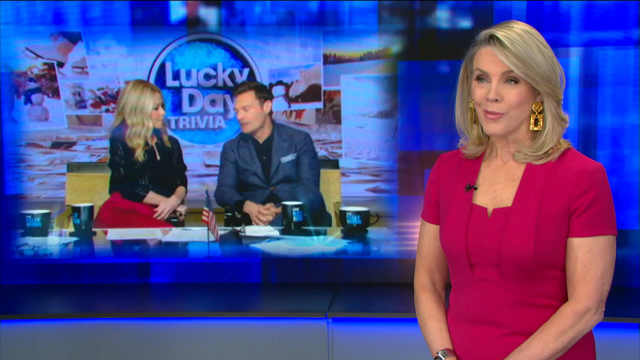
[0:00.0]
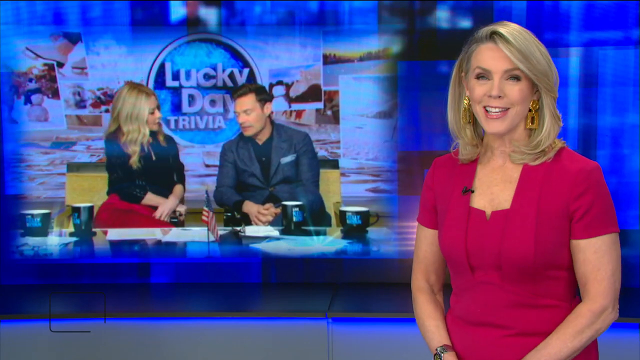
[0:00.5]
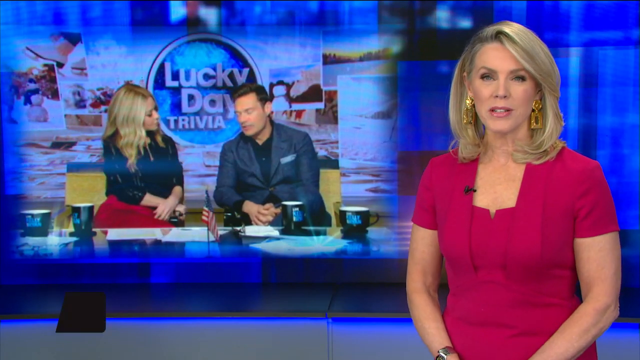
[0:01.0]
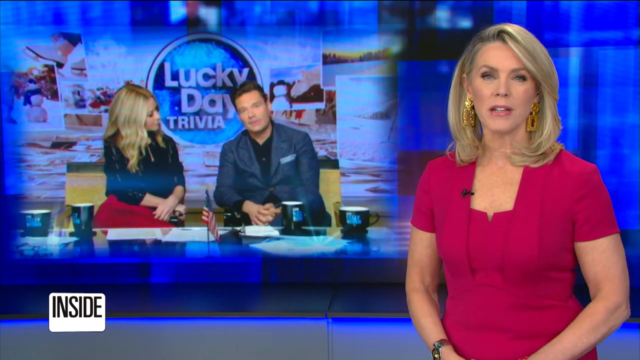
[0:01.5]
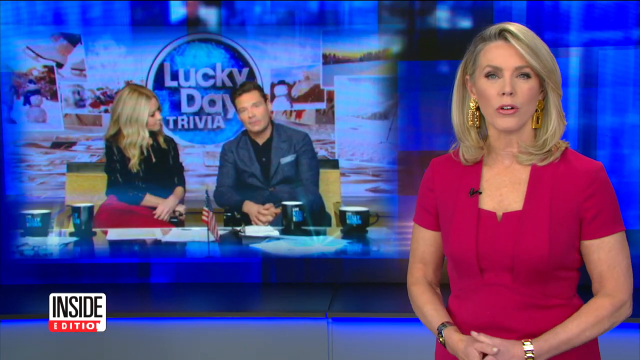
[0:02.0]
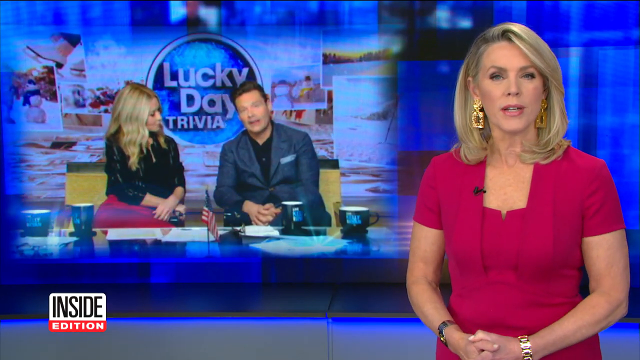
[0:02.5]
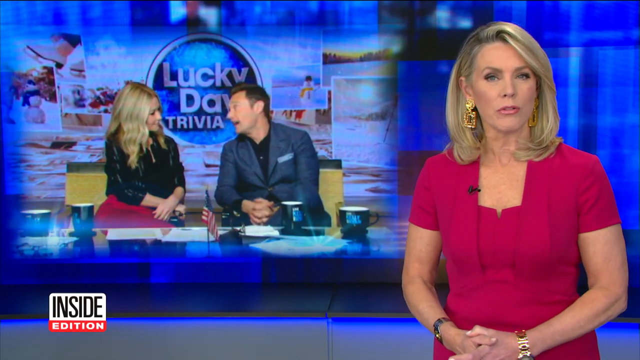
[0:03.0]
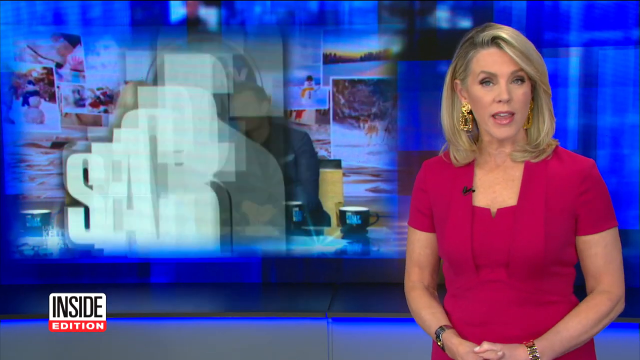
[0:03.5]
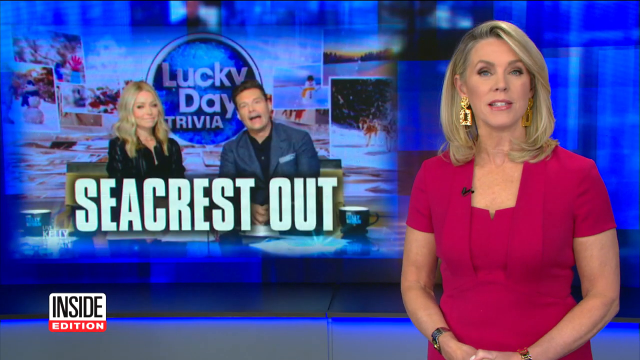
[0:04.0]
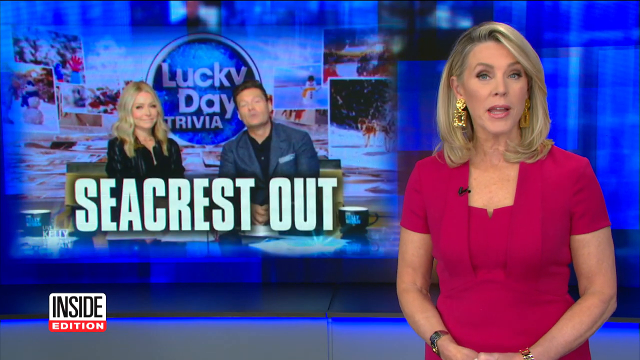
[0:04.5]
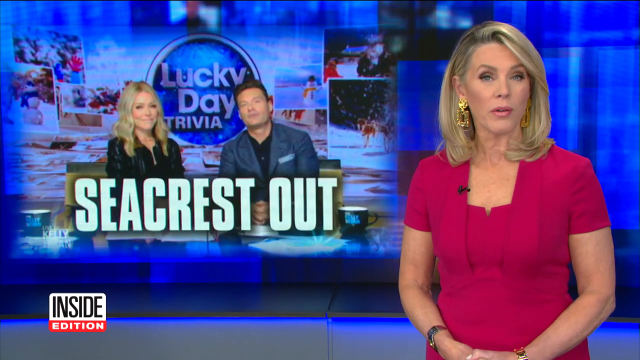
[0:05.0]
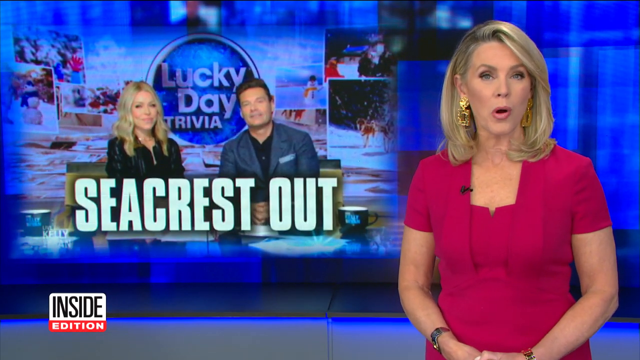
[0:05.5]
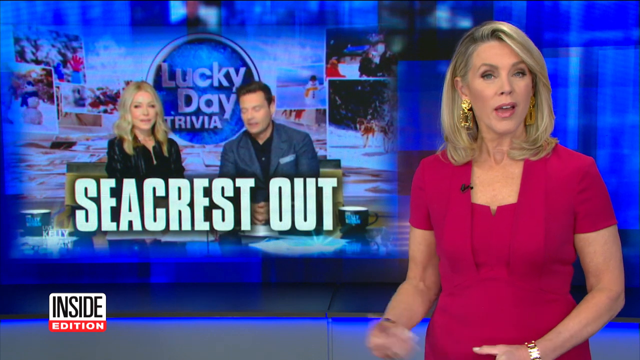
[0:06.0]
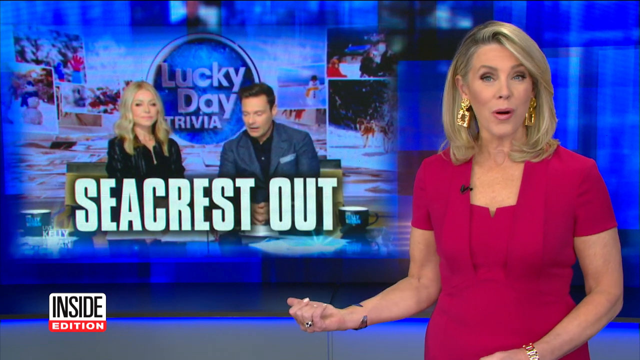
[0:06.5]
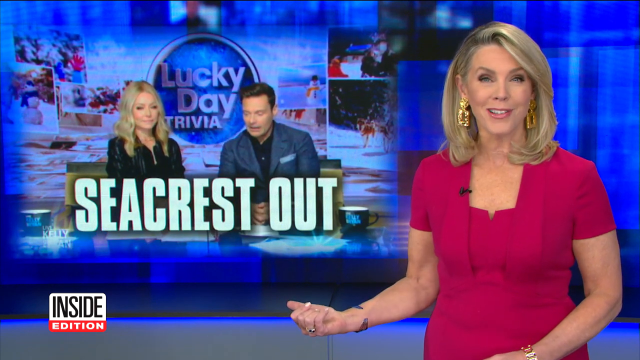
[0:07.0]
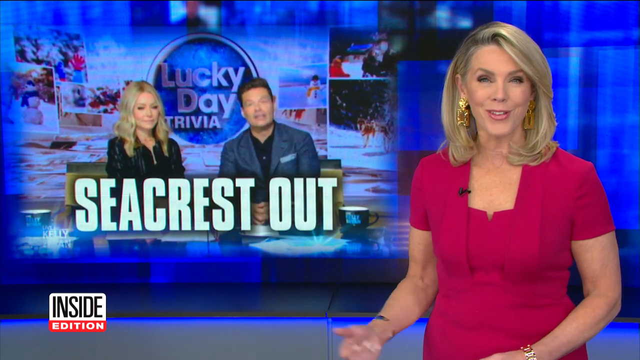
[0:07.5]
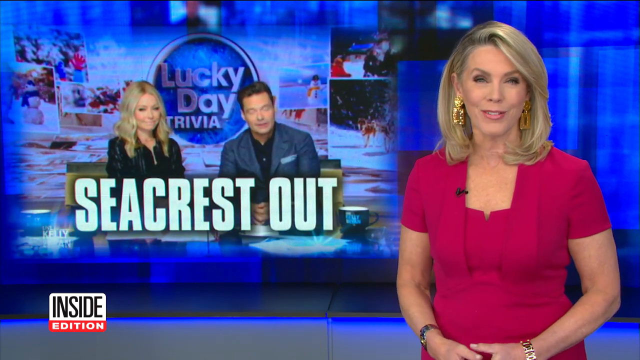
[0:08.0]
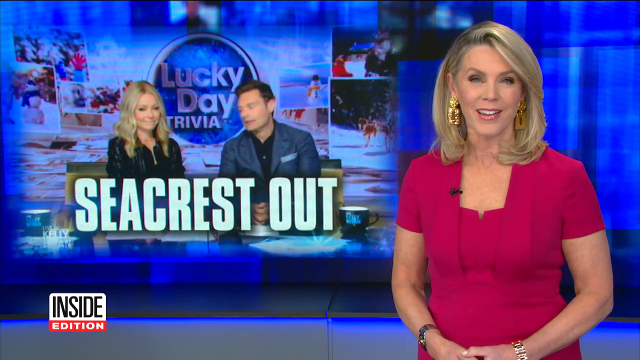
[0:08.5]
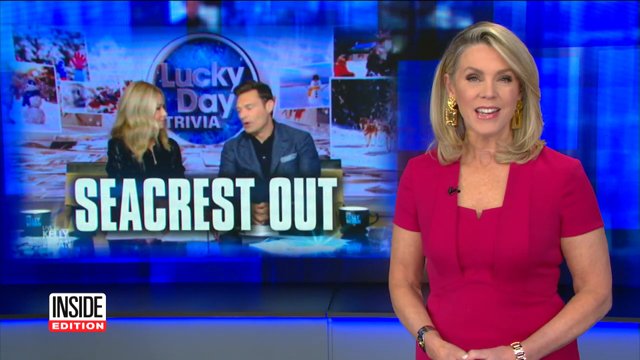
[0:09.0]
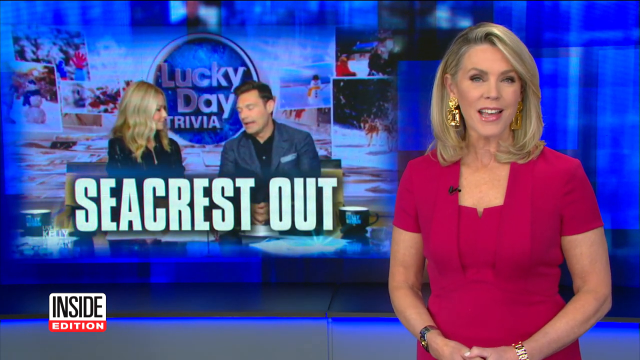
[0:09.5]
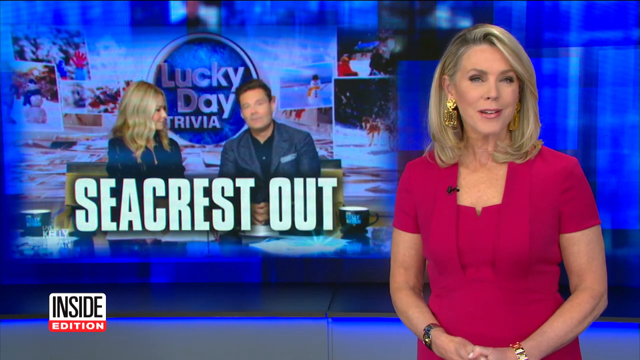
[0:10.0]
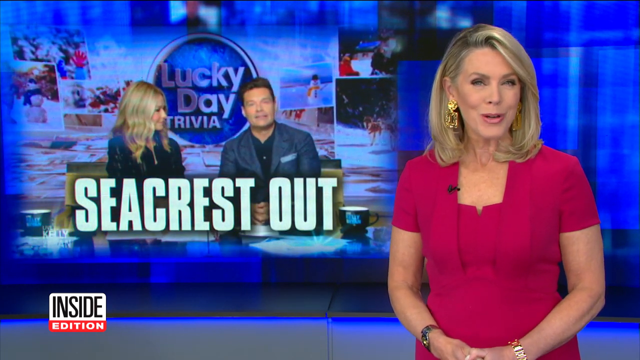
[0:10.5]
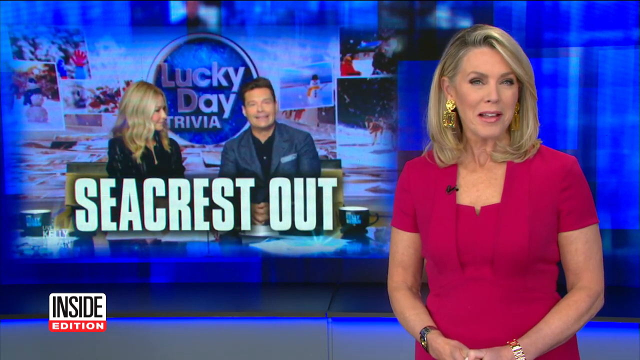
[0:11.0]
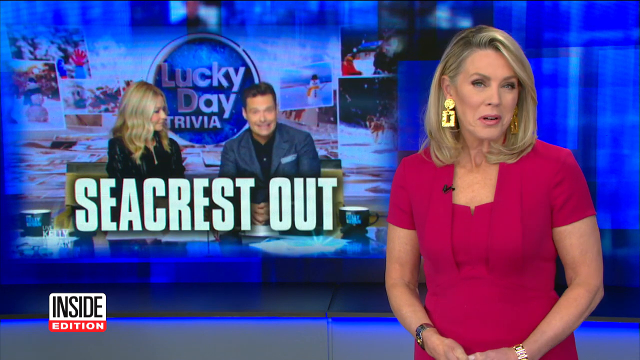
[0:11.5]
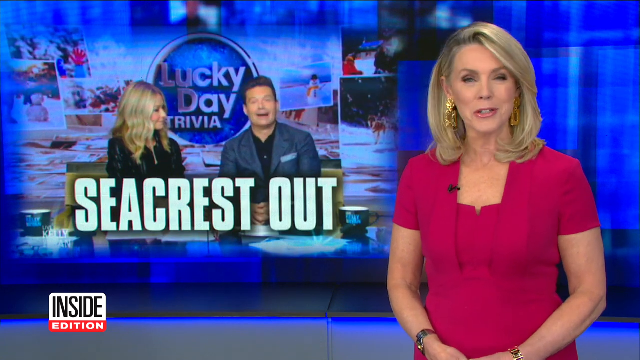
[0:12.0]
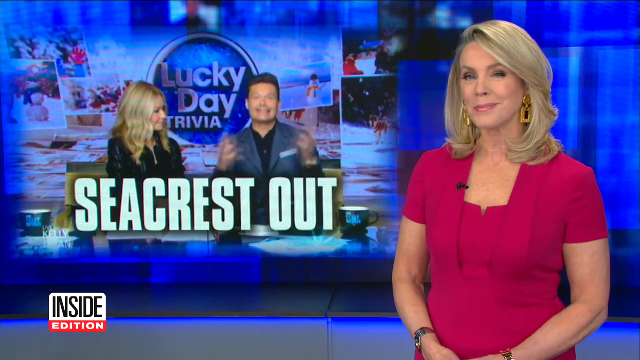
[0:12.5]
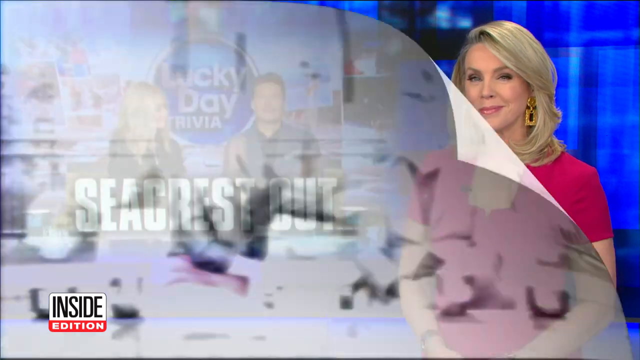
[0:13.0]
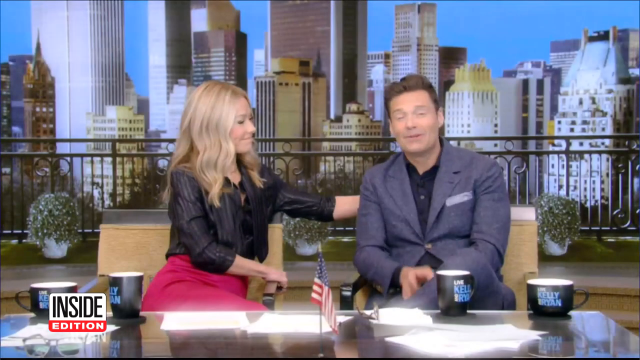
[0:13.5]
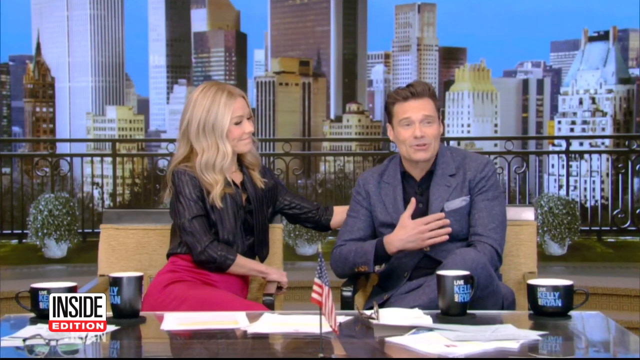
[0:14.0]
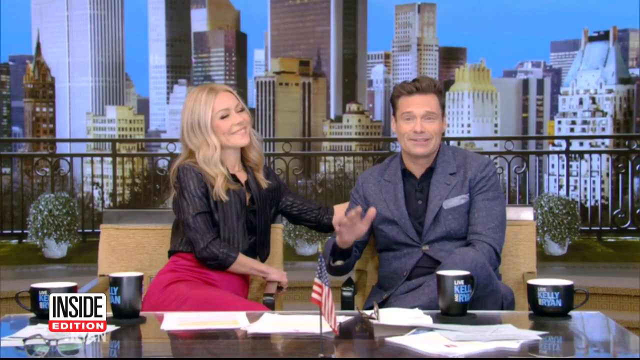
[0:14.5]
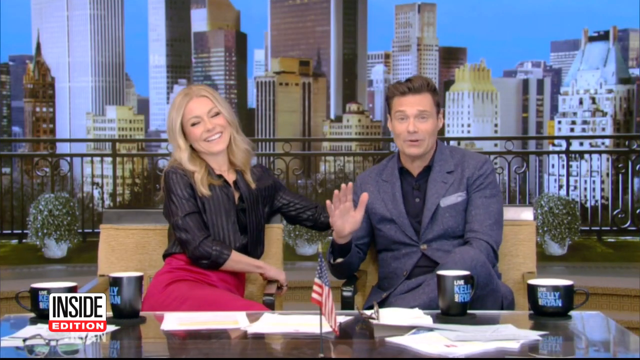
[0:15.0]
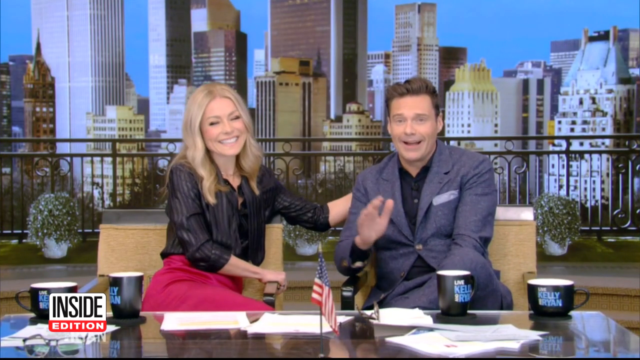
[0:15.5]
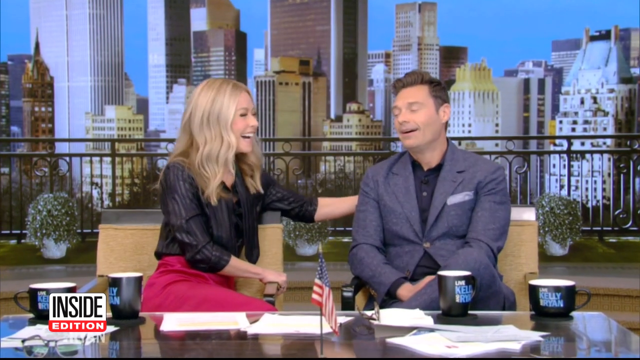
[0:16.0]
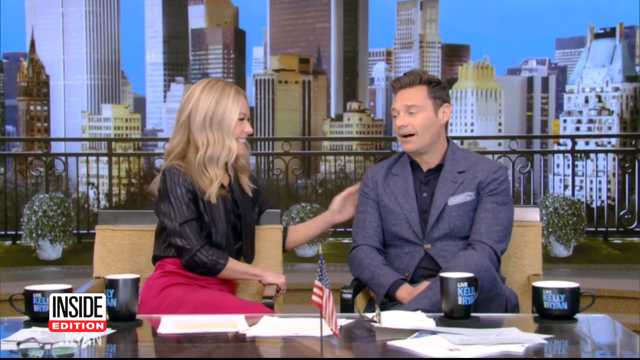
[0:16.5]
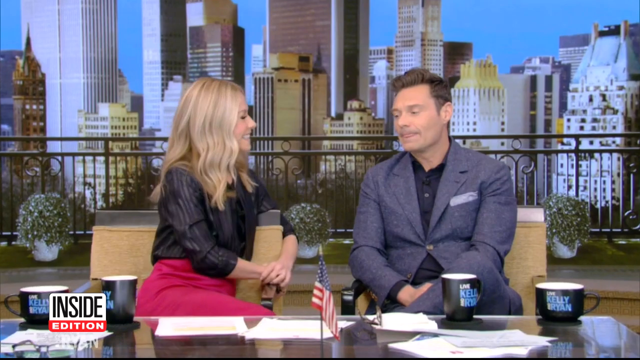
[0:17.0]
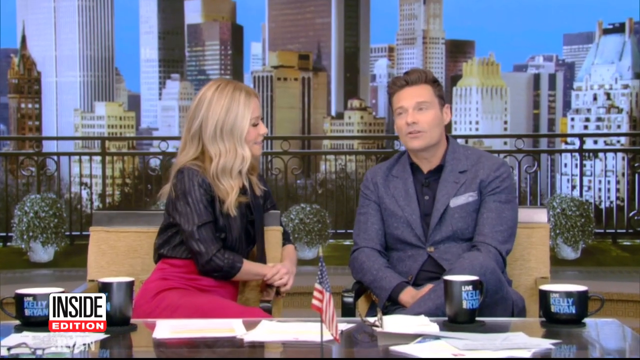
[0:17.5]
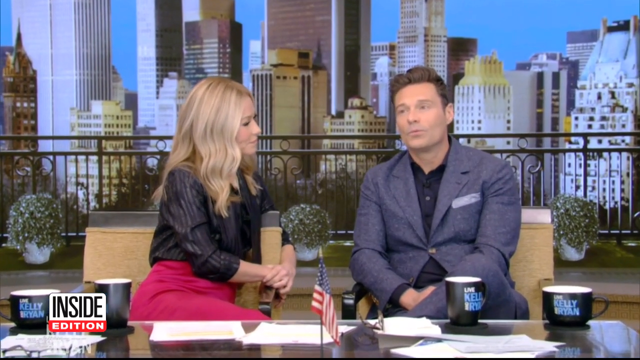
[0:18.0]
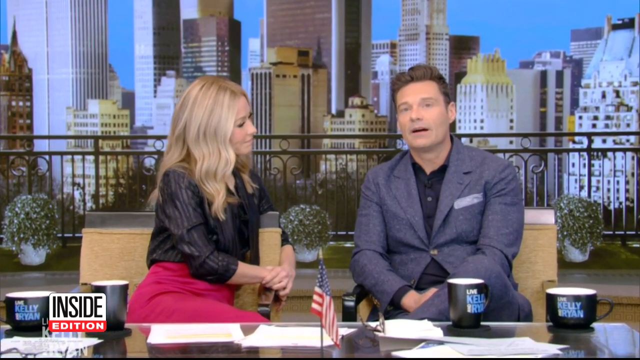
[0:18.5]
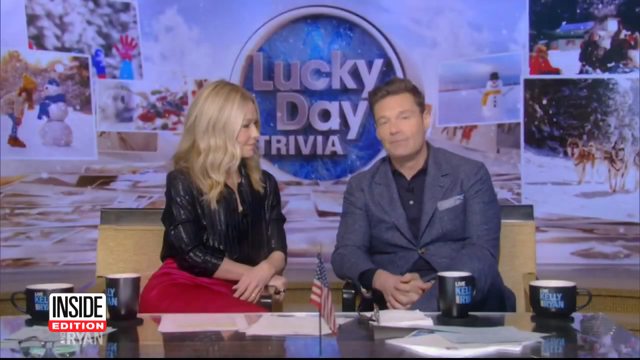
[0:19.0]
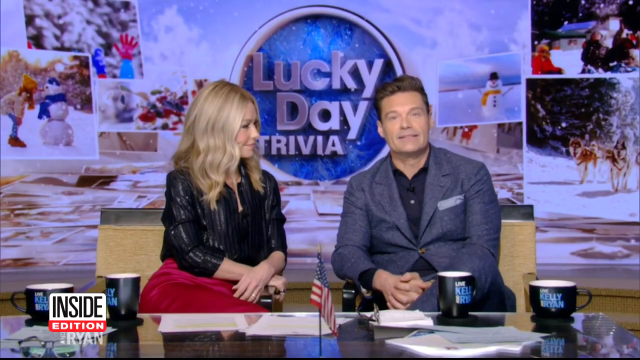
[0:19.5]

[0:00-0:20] A news report covers Ryan Seacrest leaving the Kelly and Ryan show. The reporter is a white woman with blonde hair and blue eyes, wearing large gold earrings and a bright pink short-sleeved dress. She speaks directly to the camera while a screen behind her displays Kelly Ripa and Ryan Seacrest sitting on the couch doing their talk show. The text "Seacrest out" is displayed at the bottom of the image, and in the lower left-hand corner of the screen the program is identified as "Inside Edition". Most of the background is a medium-toned blue. As the woman turns to continue speaking, two gold bracelets are visible, one on each wrist. She gestures back at the image behind her and keeps speaking, and the view then moves to bring the screen showing Kelly Ripa and Ryan Seacrest into focus. The two of them speak to one another on two separate chairs.